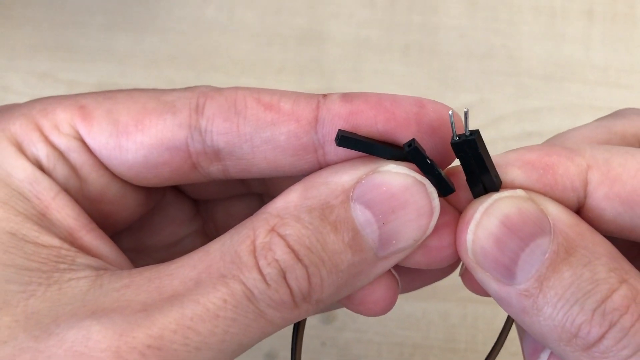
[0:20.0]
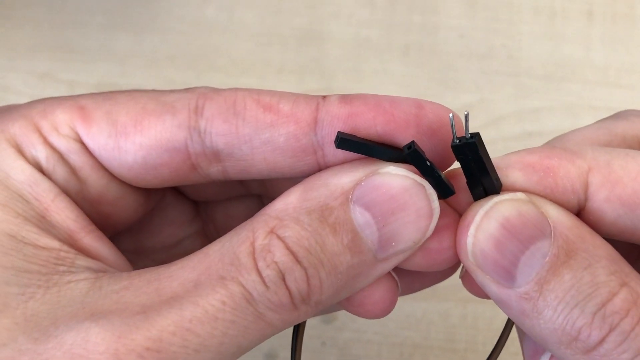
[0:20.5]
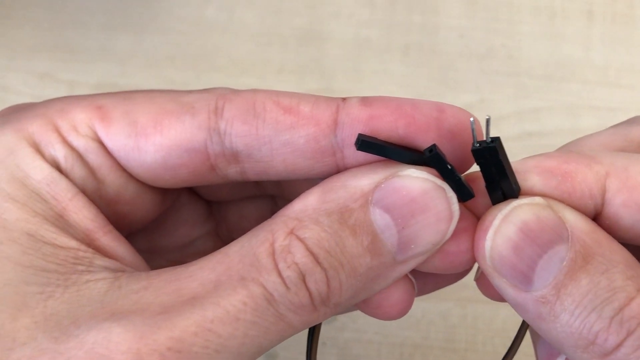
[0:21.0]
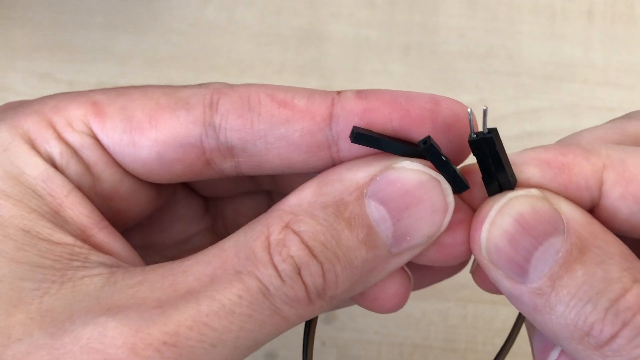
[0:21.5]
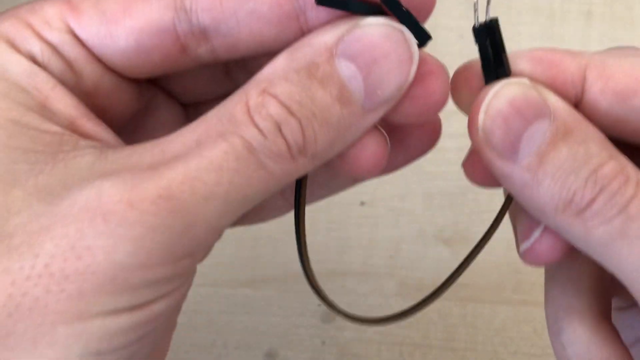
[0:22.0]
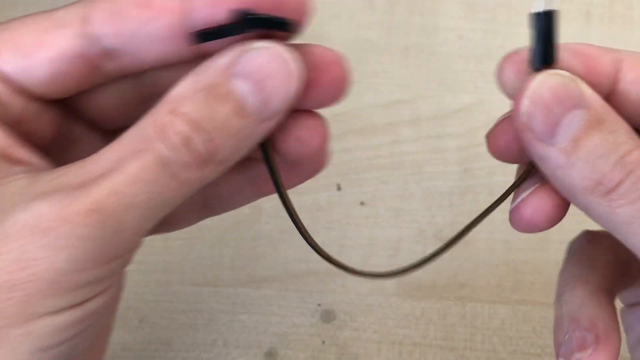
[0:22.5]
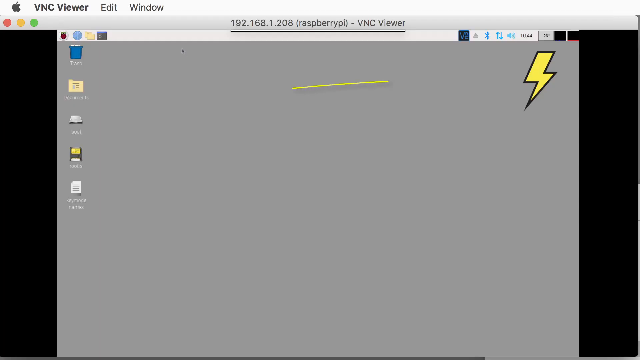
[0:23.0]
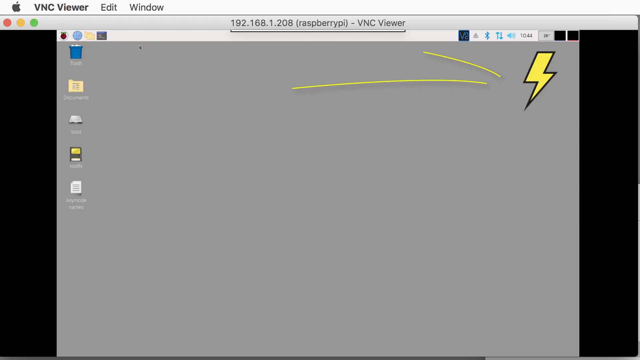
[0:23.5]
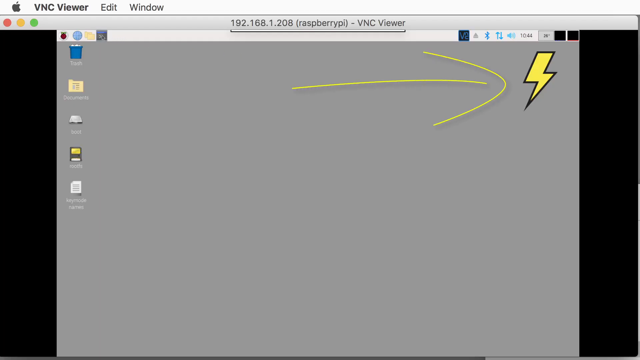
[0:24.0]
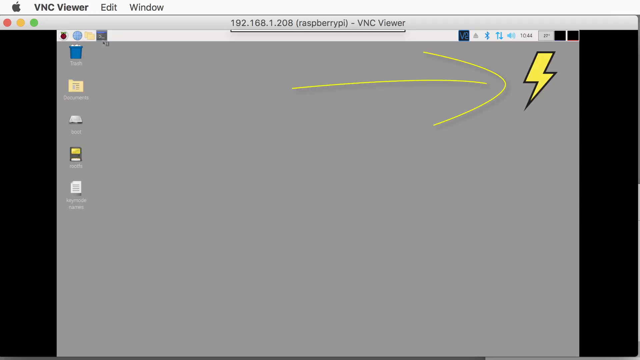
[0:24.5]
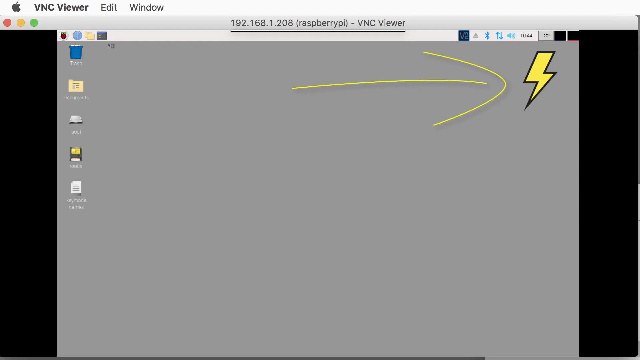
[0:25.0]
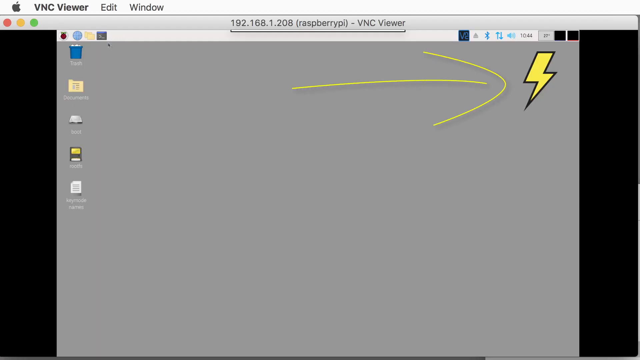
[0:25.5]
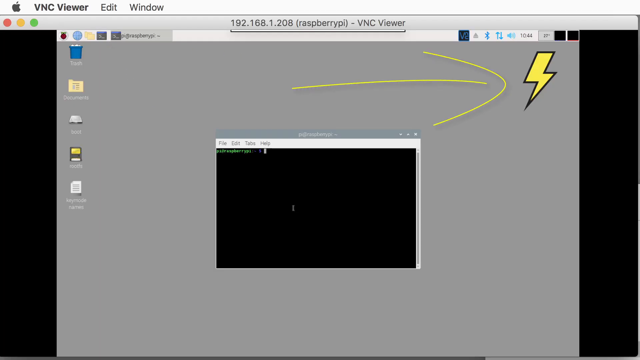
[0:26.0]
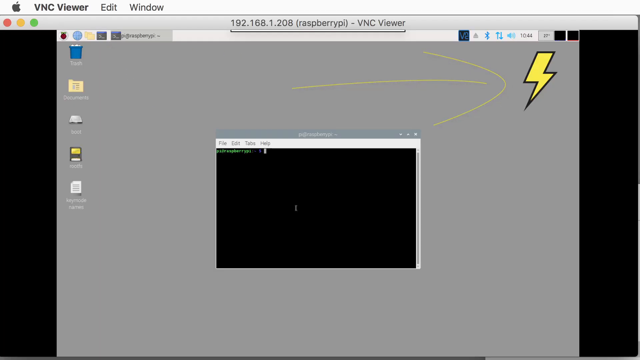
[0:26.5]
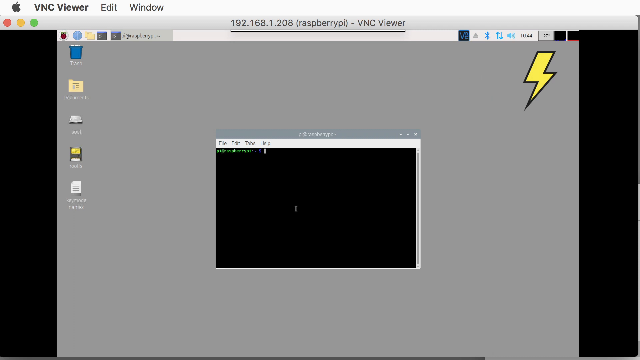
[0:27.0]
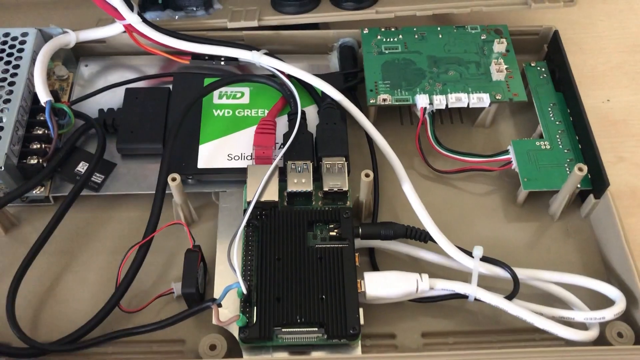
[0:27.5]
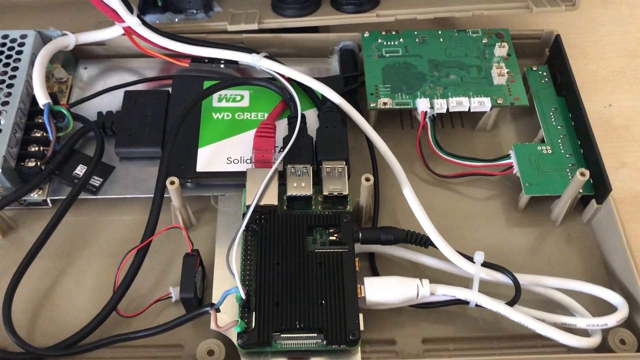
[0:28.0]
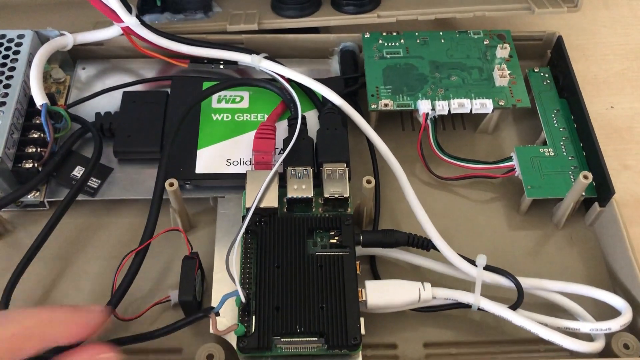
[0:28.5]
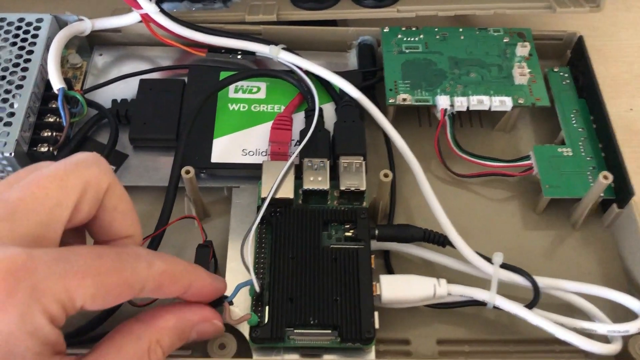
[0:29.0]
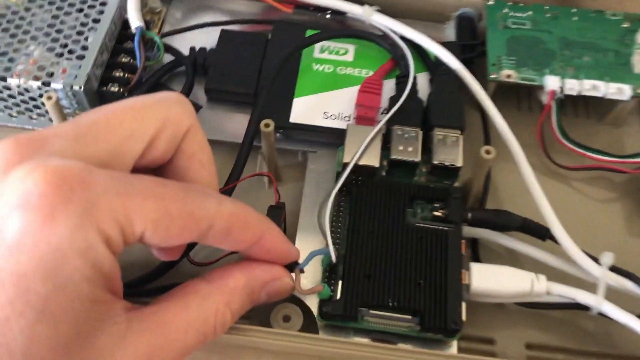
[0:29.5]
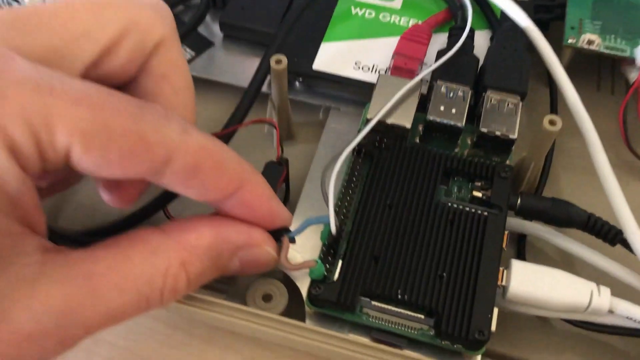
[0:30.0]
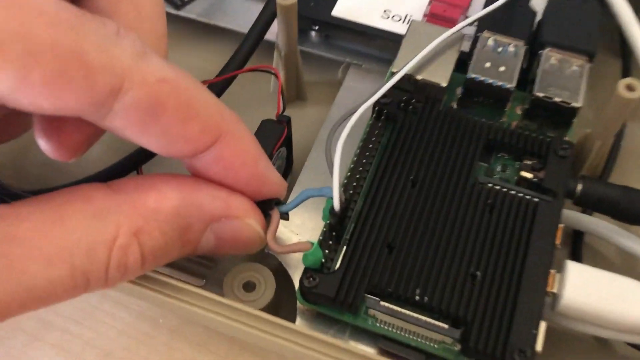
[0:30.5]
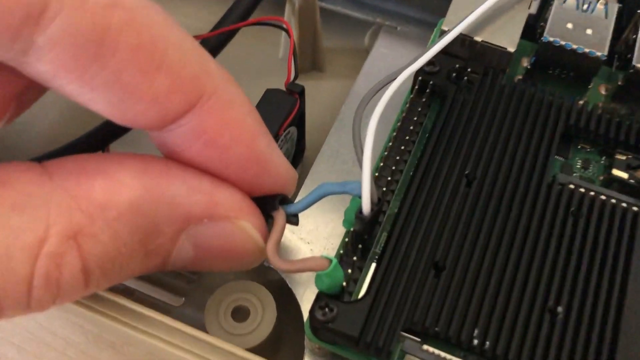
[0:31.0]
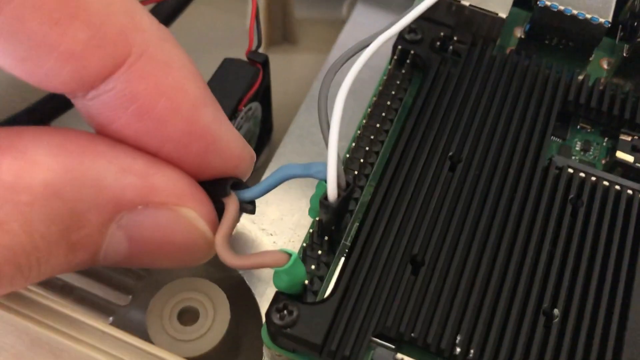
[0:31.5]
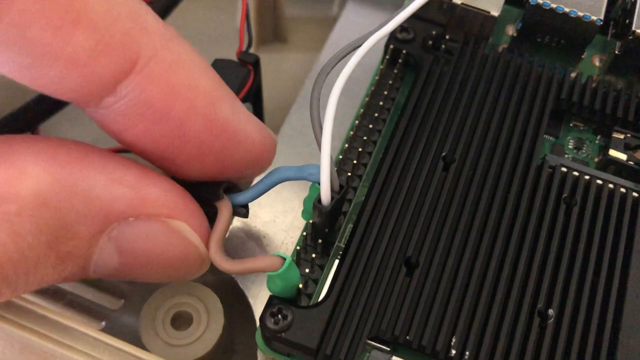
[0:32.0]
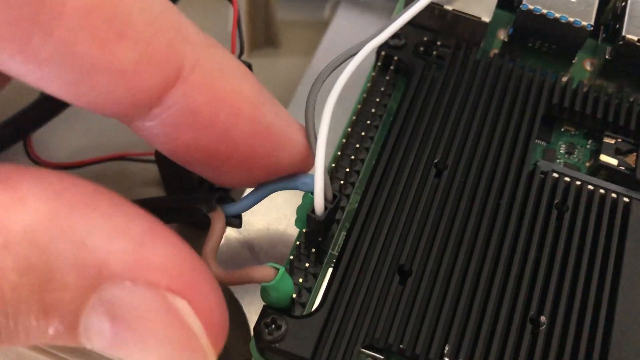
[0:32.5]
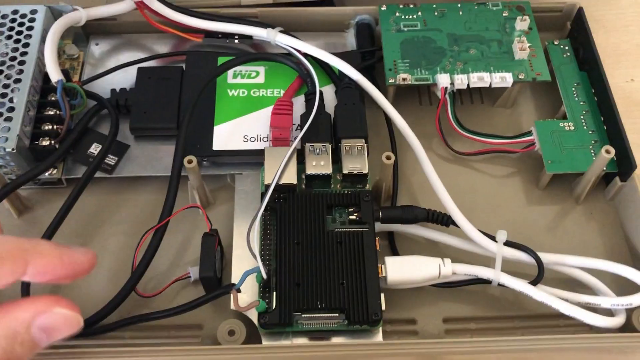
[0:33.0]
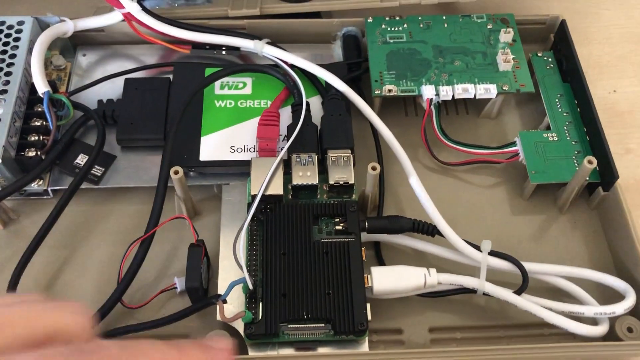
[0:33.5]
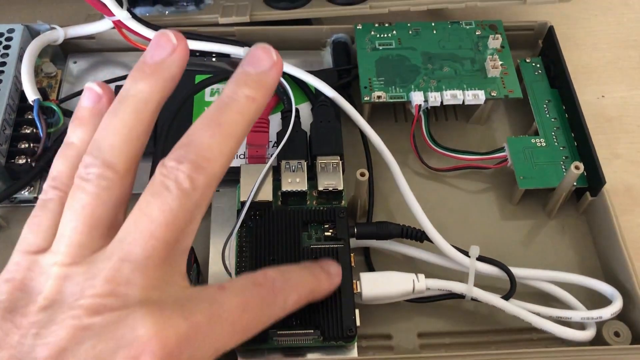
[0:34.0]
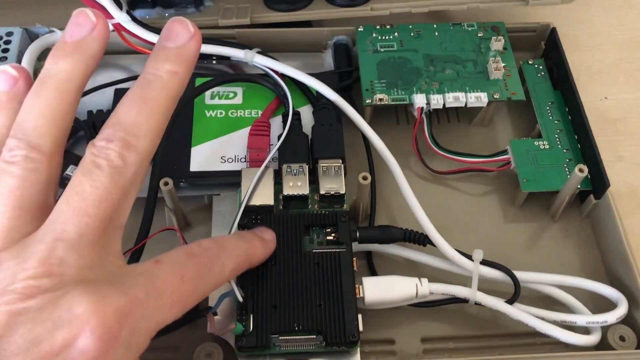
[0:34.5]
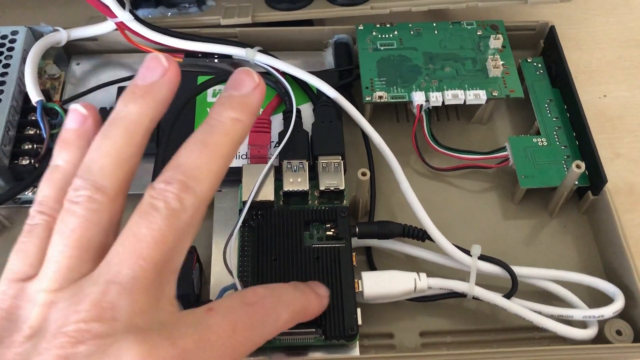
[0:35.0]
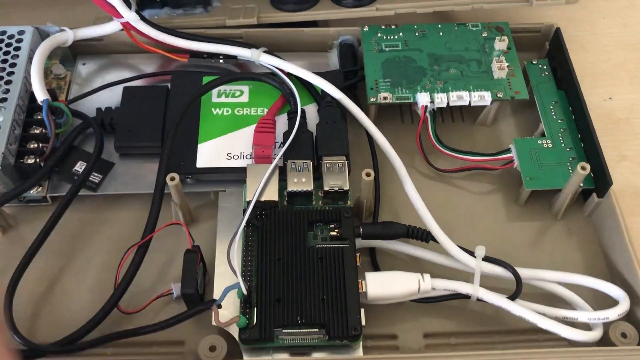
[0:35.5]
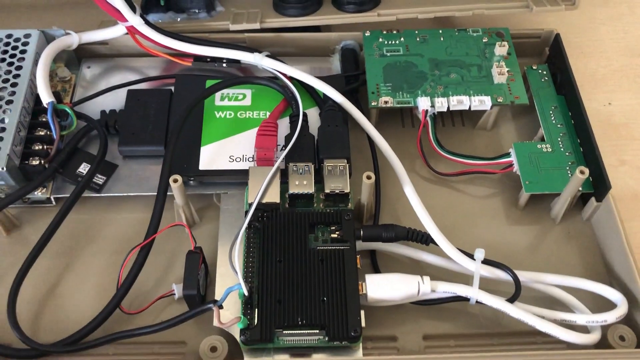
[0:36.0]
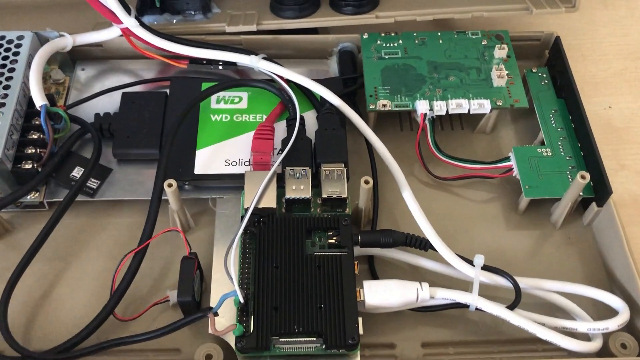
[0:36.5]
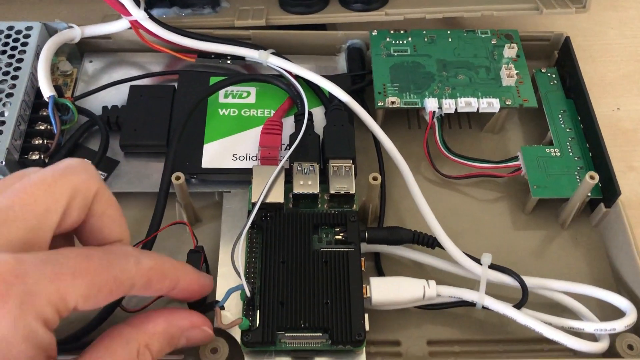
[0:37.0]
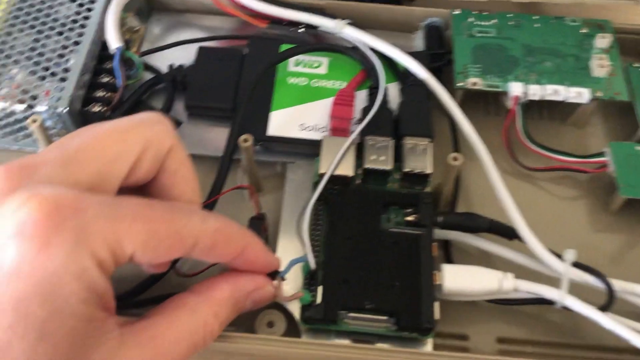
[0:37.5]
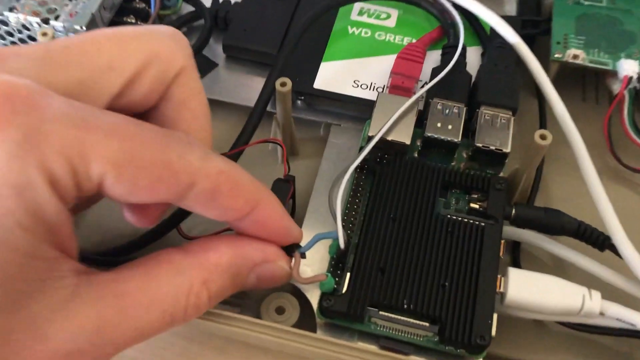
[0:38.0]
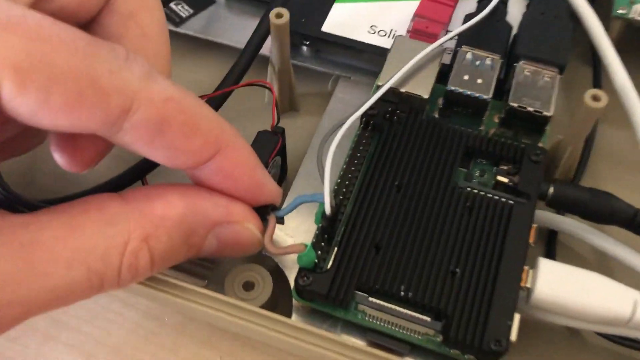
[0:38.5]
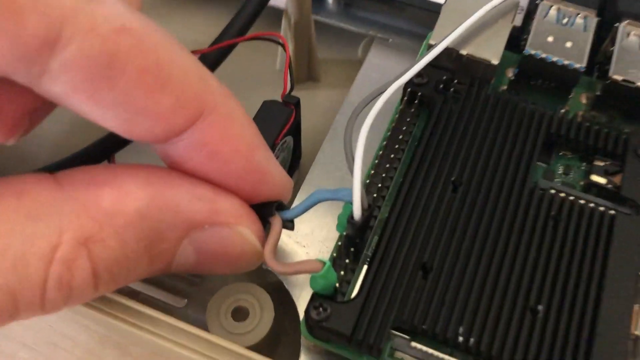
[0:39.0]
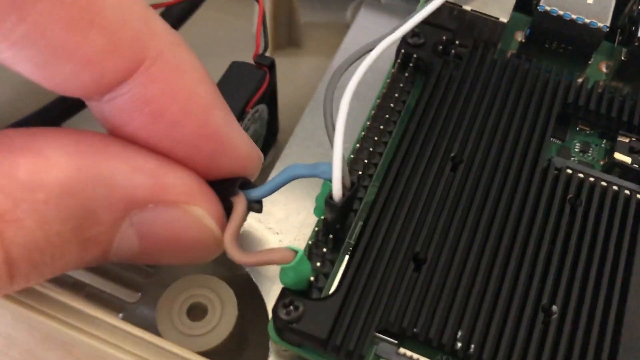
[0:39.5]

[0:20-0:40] Someone holds a wire with both hands, then the video moves to a computer screen running a Mac operating system. On the upper right-hand side is a lightning bolt icon, with a yellow arrow drawn pointing to it. A terminal window comes on. The interior of the keyboard is shown again, and a person points out two lead wires, one blue and one pink, plugged into some sort of port. The person points at a black box inside the keyboard, then again at the blue and pink wiring. A white wire goes across and into a black box. Three ports, which look like USB and Ethernet ports, go into the device inside, which is apparently a Raspberry Pi.